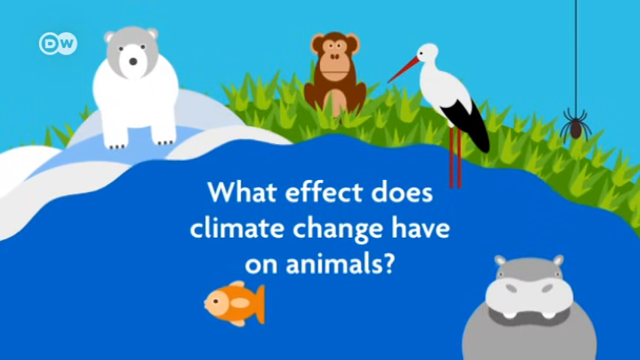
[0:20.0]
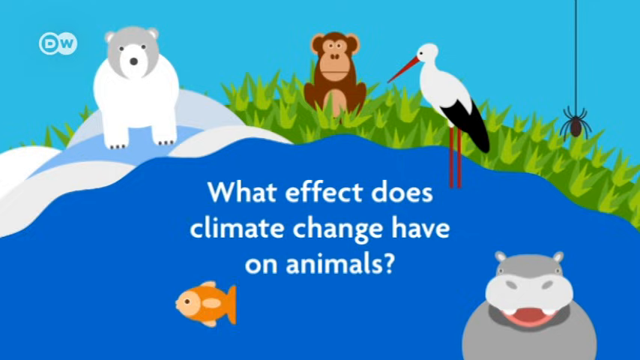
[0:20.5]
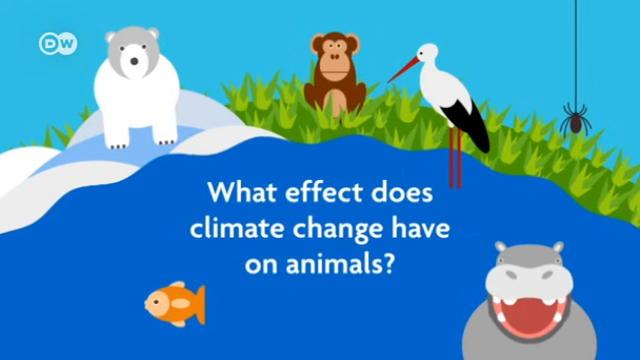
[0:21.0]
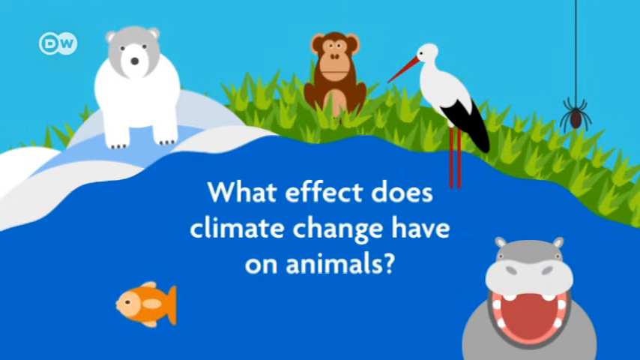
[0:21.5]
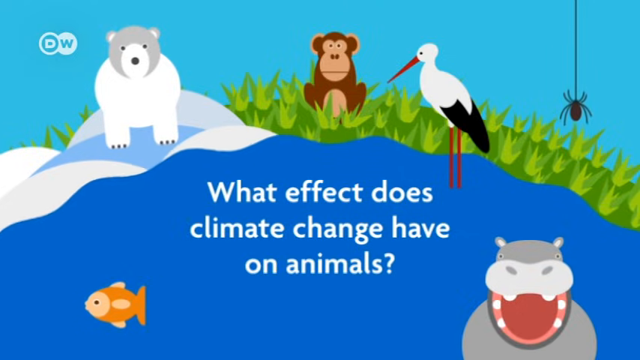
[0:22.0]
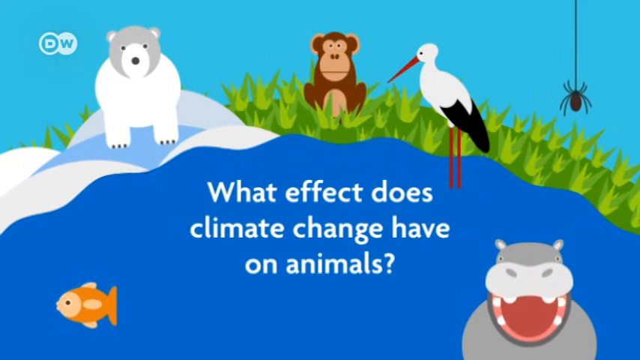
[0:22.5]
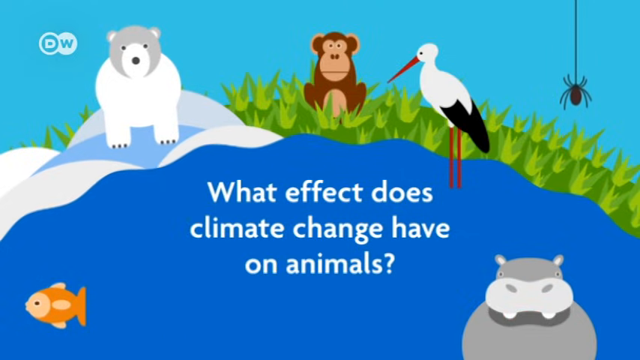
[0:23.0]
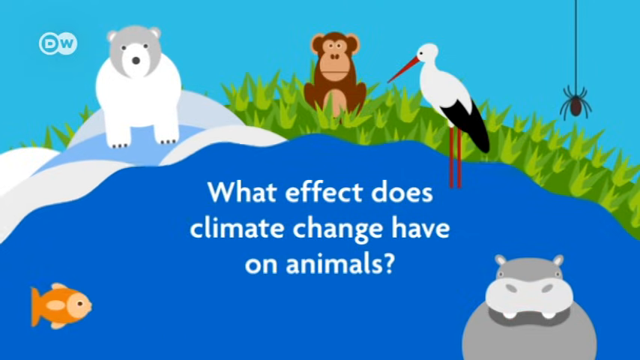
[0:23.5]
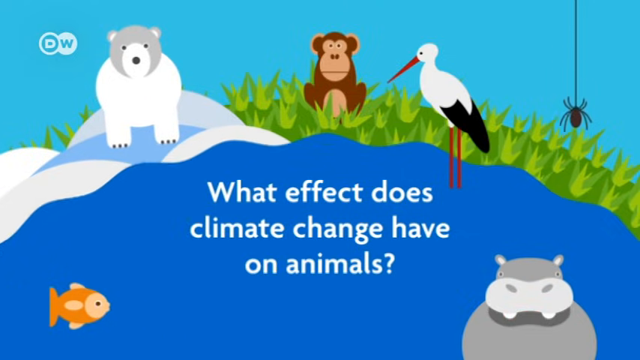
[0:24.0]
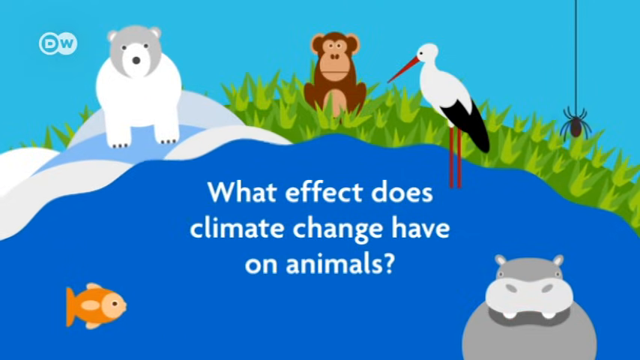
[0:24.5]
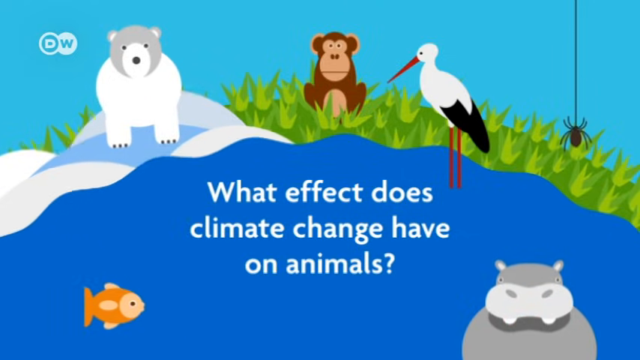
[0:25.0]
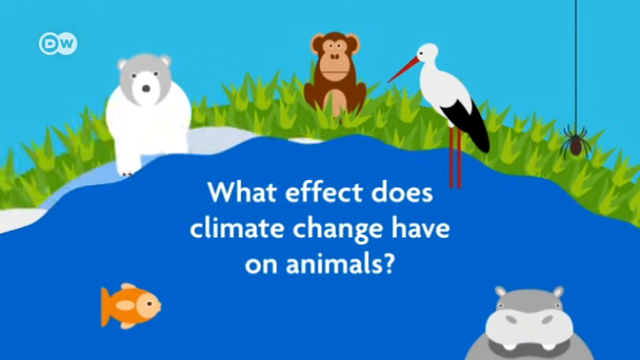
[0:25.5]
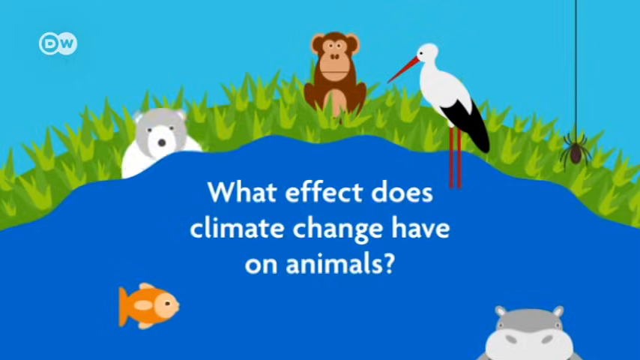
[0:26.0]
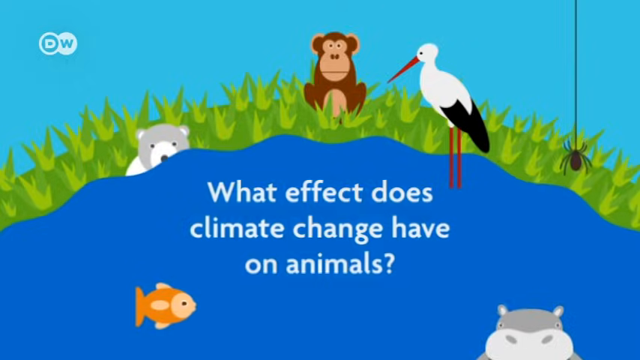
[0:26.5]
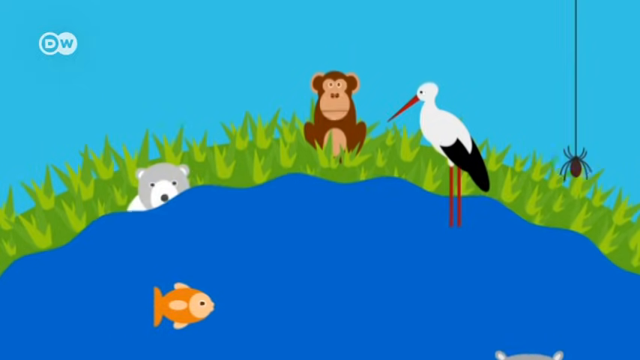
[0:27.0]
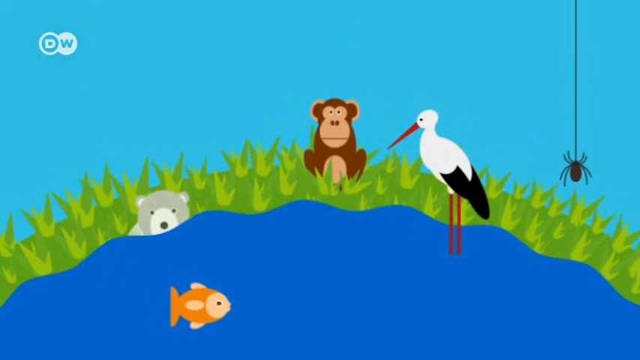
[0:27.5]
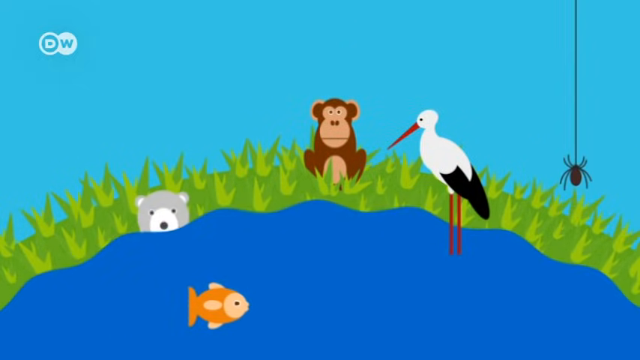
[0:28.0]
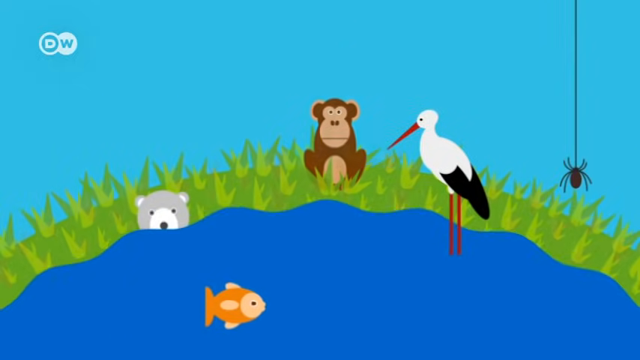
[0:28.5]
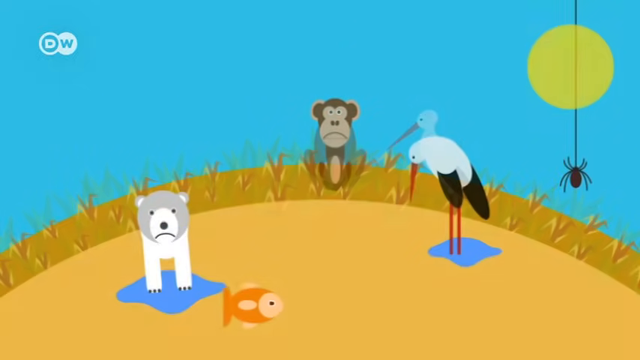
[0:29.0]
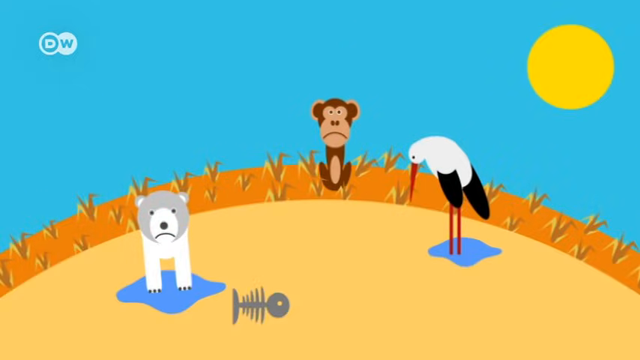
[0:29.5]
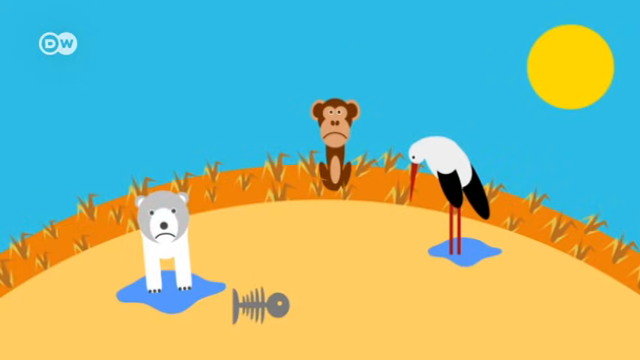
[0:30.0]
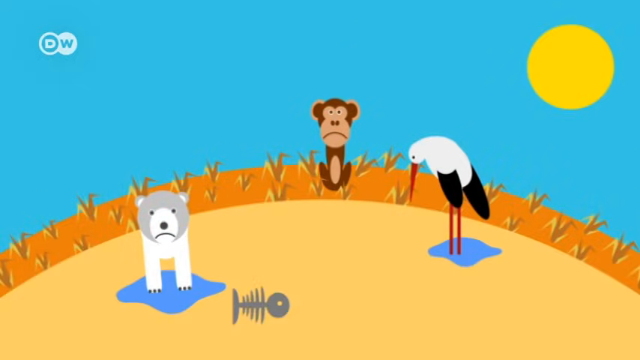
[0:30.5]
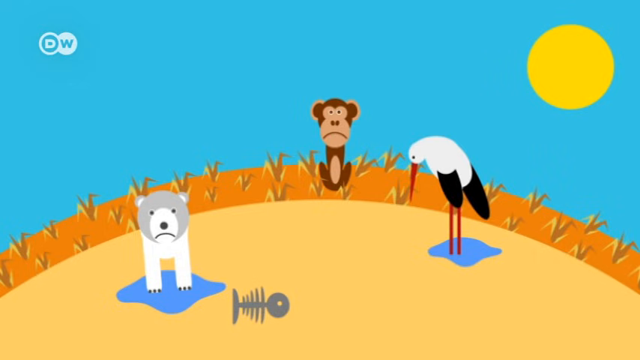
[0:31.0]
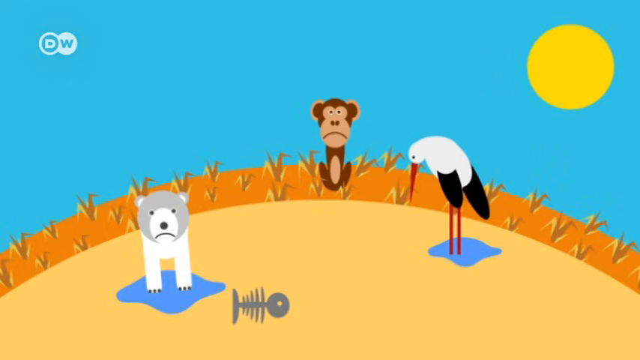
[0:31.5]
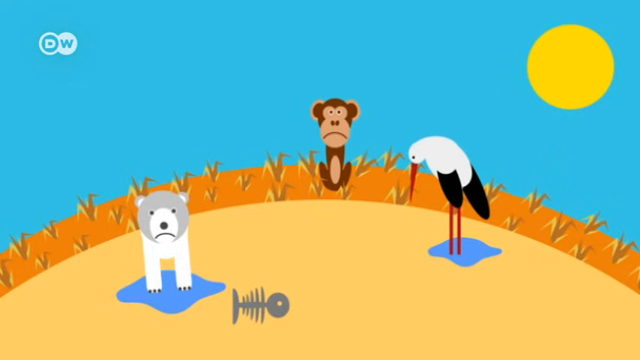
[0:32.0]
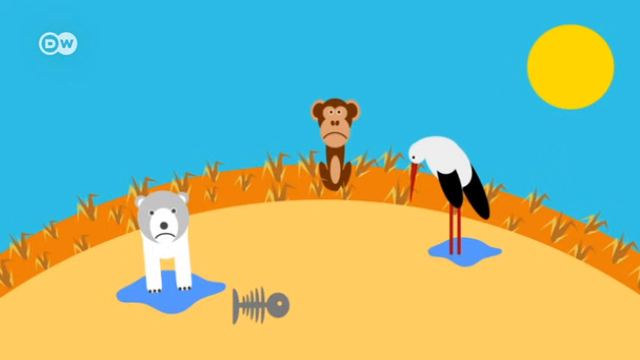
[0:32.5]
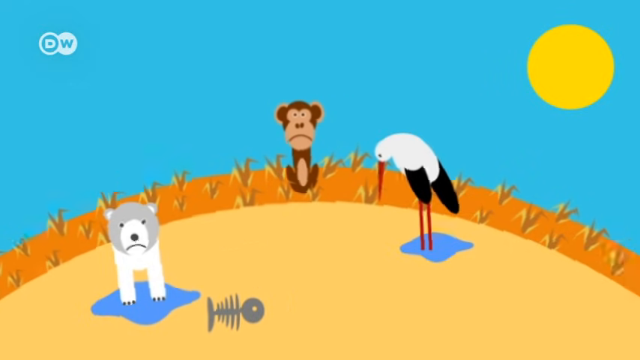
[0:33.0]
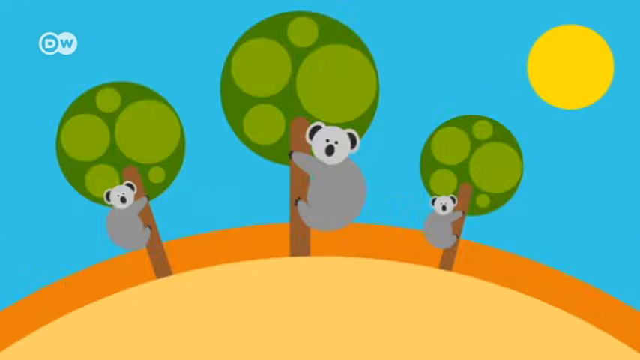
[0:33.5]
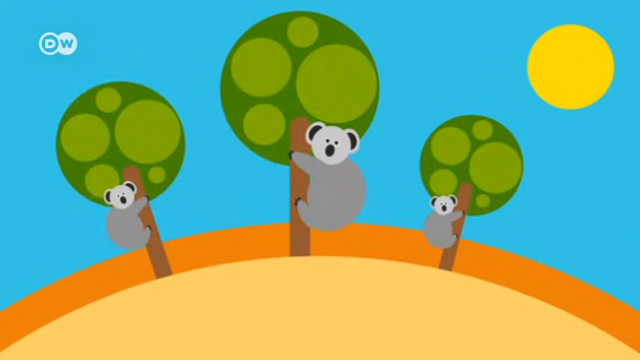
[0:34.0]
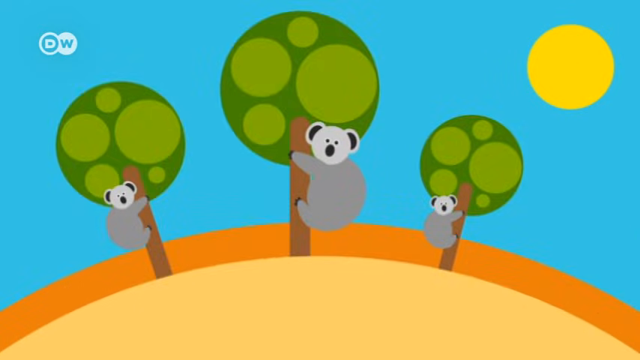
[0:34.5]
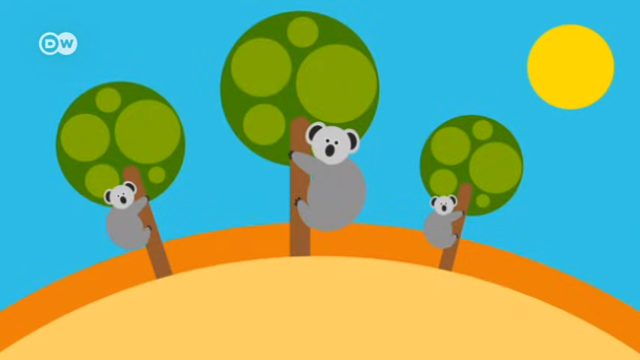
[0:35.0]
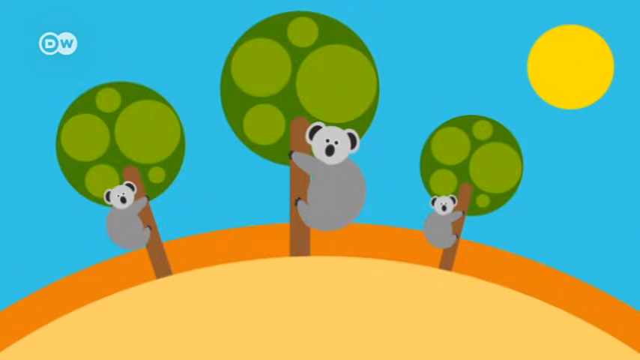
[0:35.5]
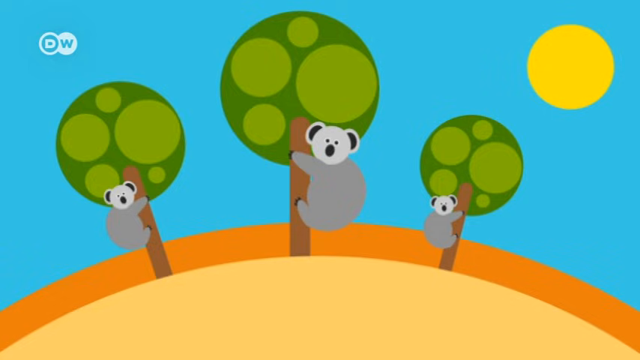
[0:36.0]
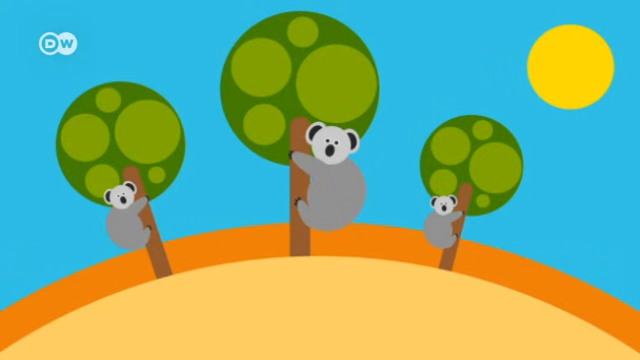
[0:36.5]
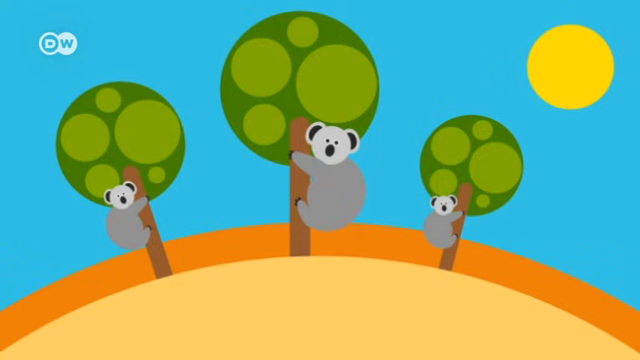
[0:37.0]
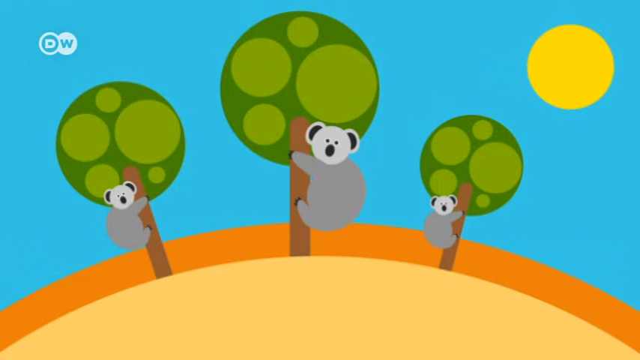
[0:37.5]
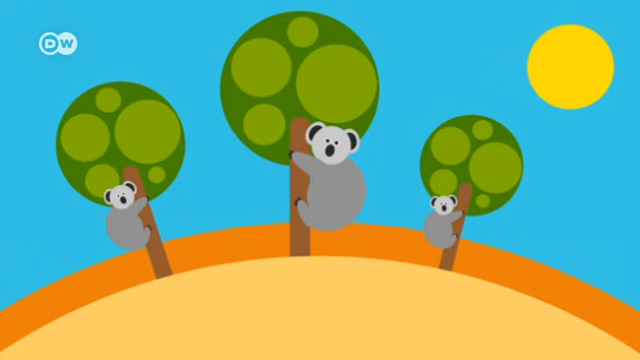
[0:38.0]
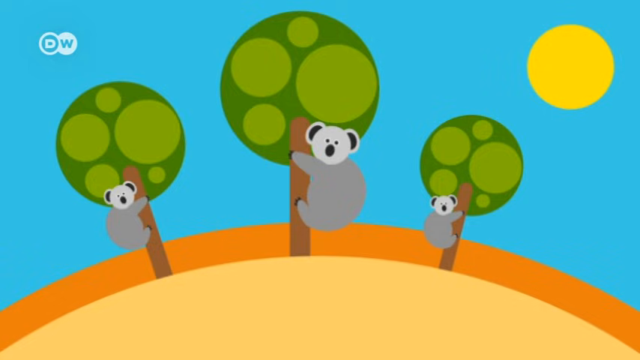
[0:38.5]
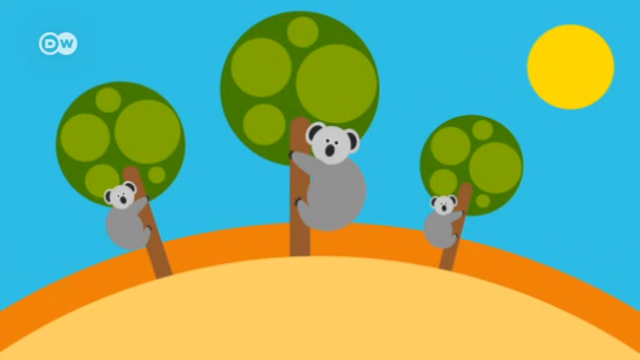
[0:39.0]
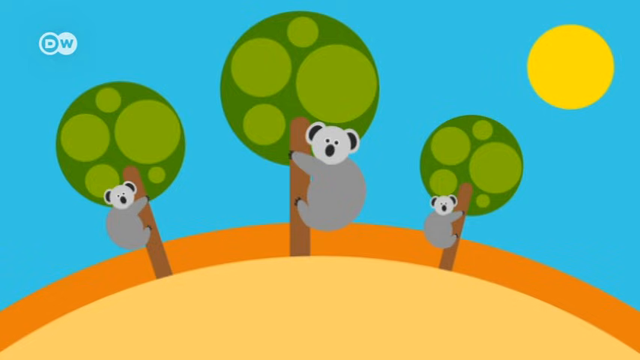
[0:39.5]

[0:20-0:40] The animated screen with the animals continues, with the words "what effect does climate change have on animals". The fish swims back and forth, and the hippo opens its mouth wide and shuts it. The scene then changes to one where all the animals look very sad. The ice, the ocean and the grassland are gone; there is only desert with two little puddles of water. A fish bone is on the ground, and the sun is up high, looking very hot and shiny. The bird stands on just a little puddle of water, looking down very sad, and the polar bear also stands on just a small puddle of water, looking very sad. A monkey sits on dry grass, looking sad. Next, three koala bears climb three trees in the desert with the sun up high.